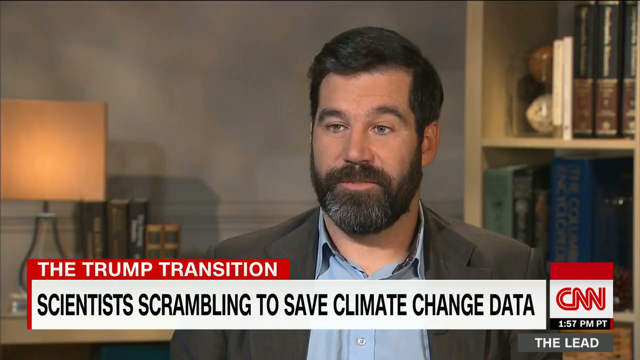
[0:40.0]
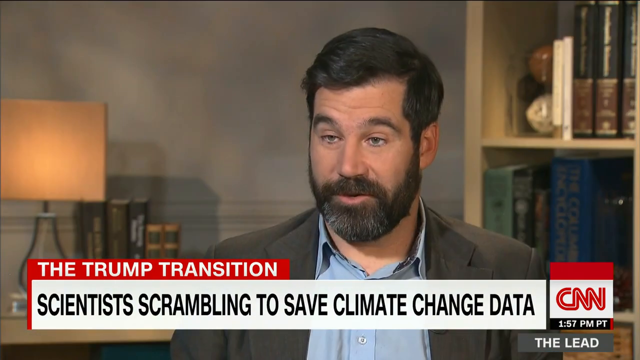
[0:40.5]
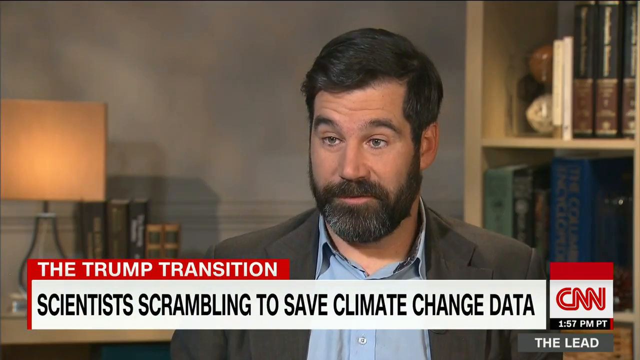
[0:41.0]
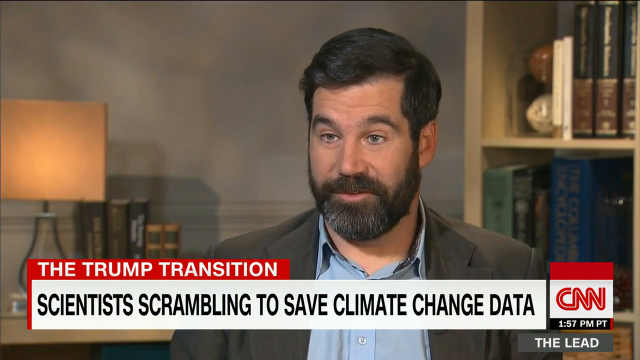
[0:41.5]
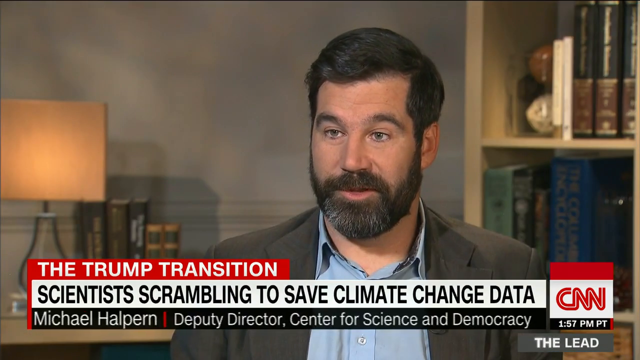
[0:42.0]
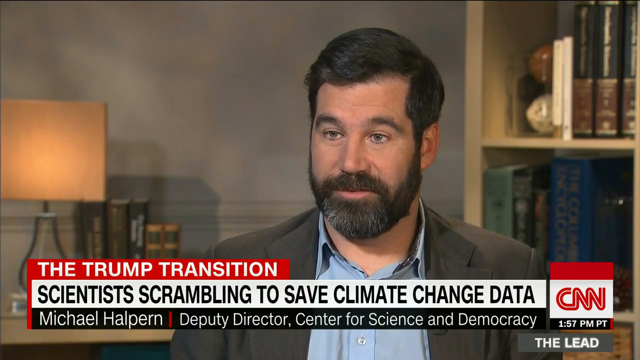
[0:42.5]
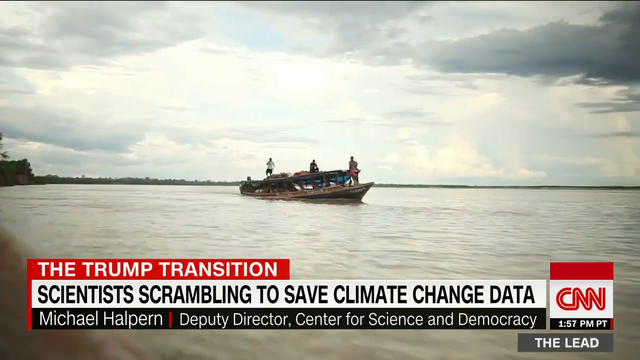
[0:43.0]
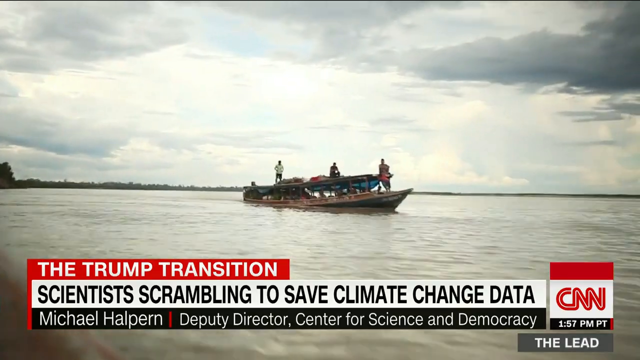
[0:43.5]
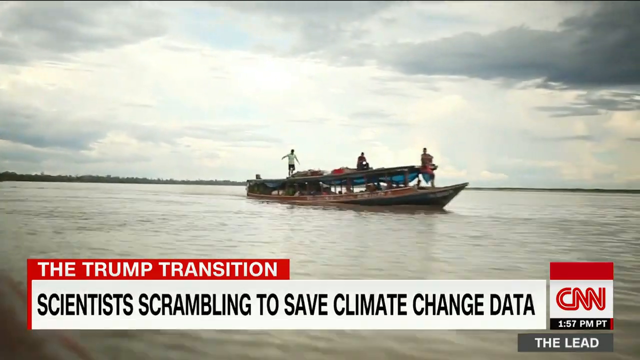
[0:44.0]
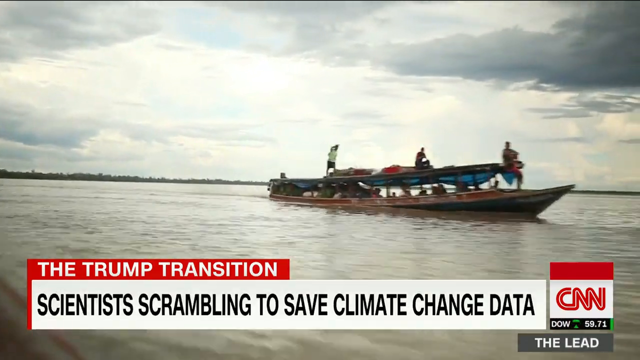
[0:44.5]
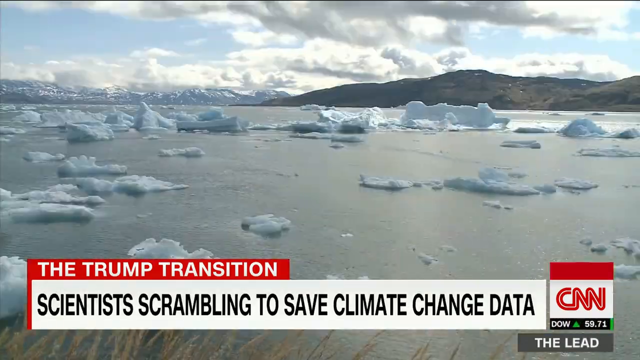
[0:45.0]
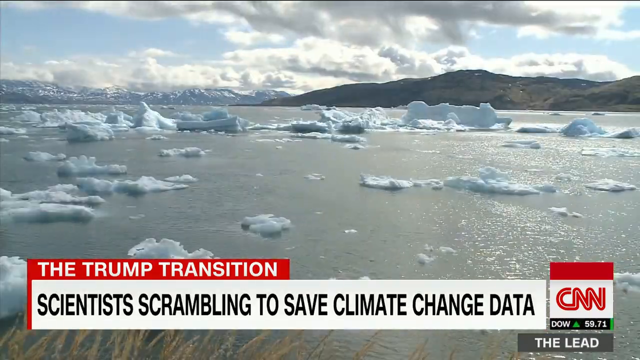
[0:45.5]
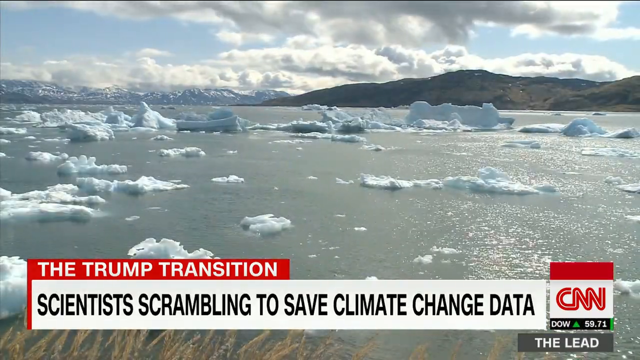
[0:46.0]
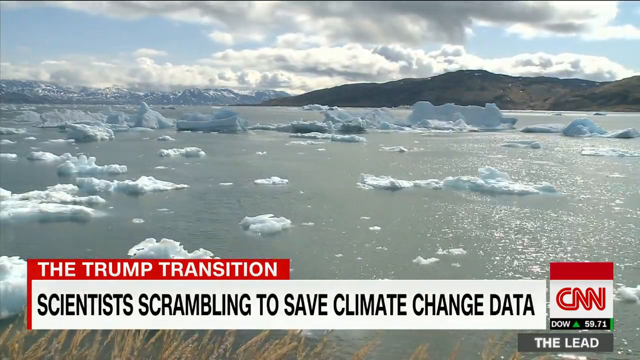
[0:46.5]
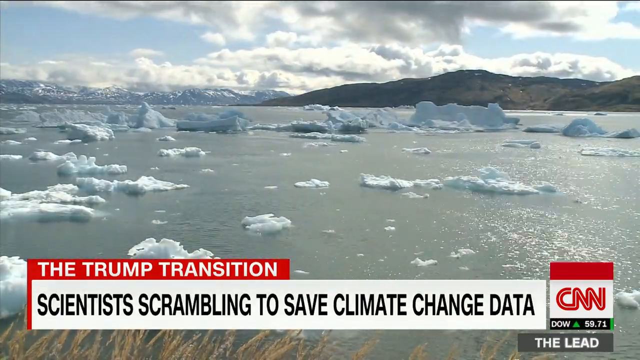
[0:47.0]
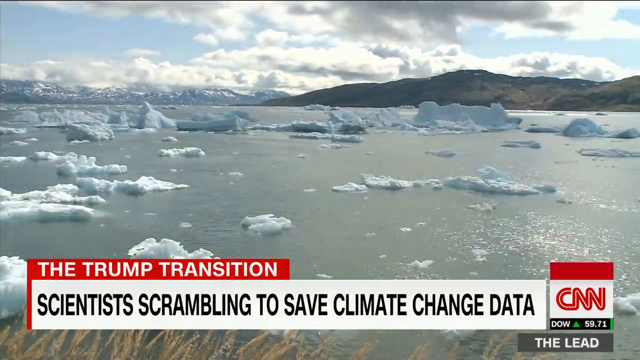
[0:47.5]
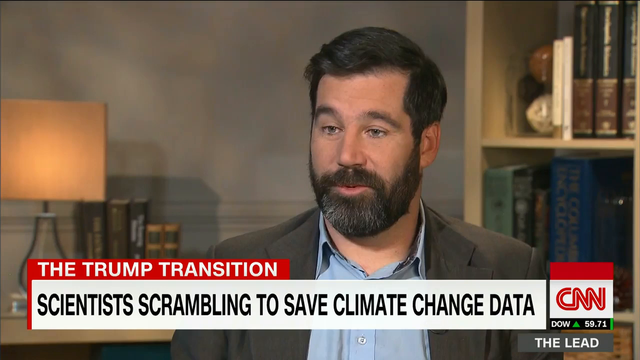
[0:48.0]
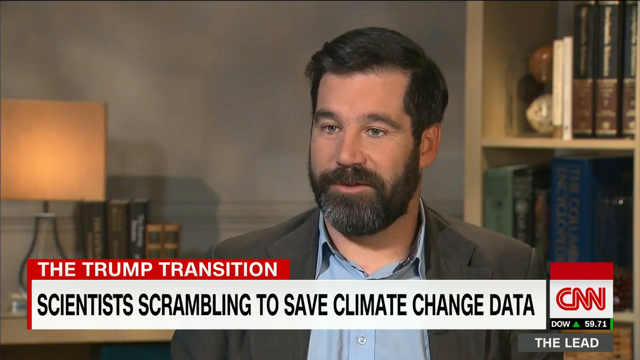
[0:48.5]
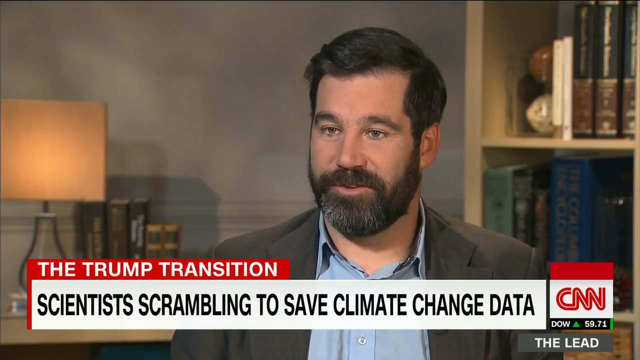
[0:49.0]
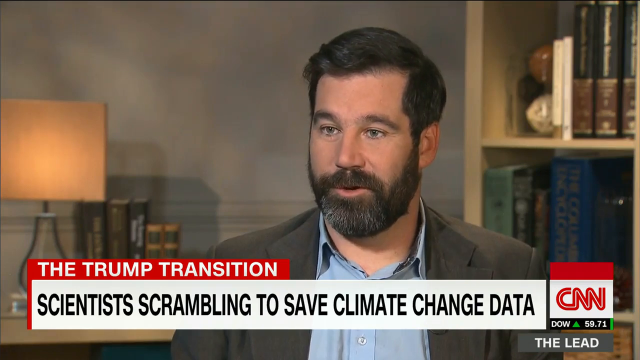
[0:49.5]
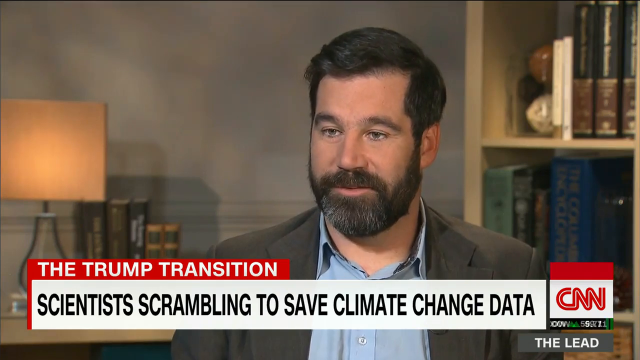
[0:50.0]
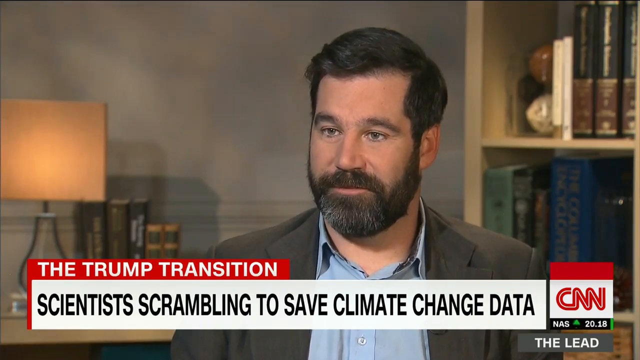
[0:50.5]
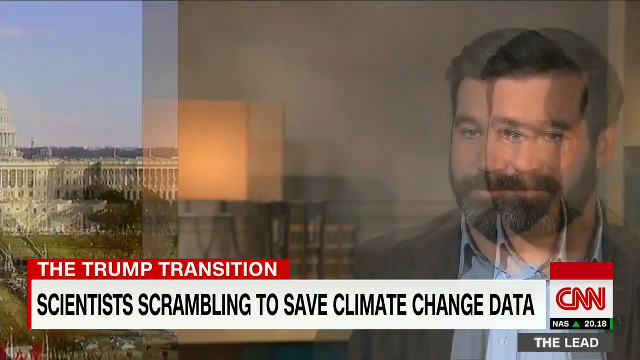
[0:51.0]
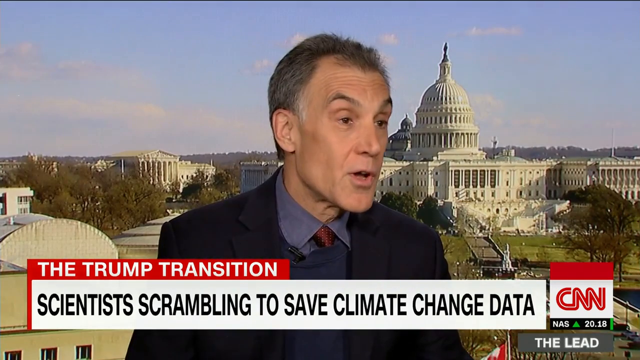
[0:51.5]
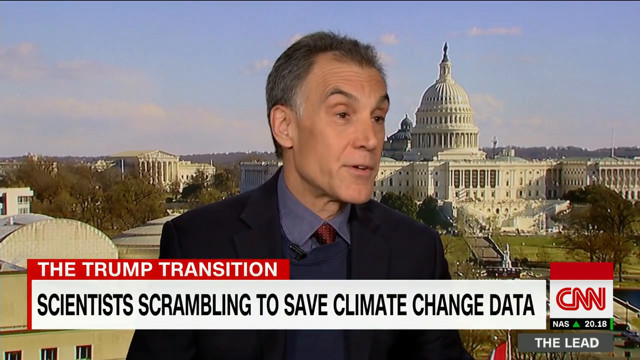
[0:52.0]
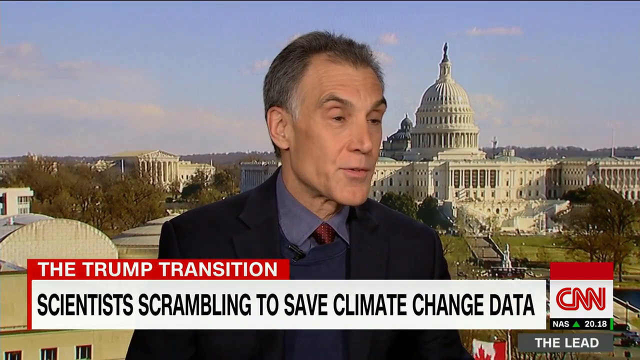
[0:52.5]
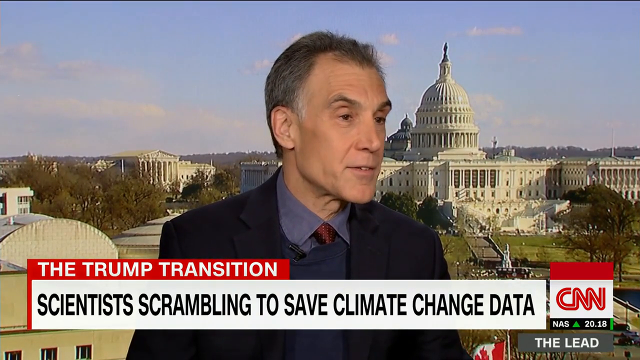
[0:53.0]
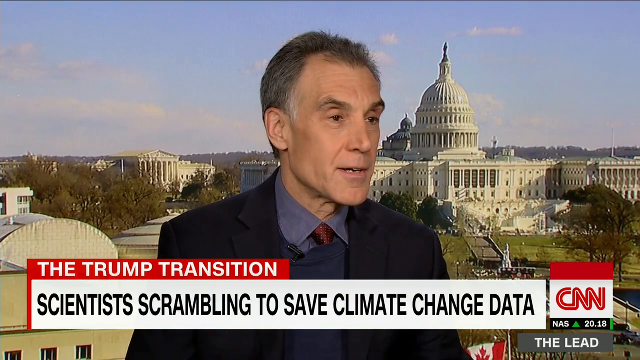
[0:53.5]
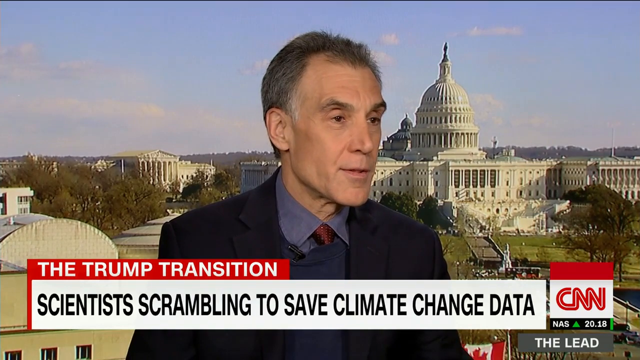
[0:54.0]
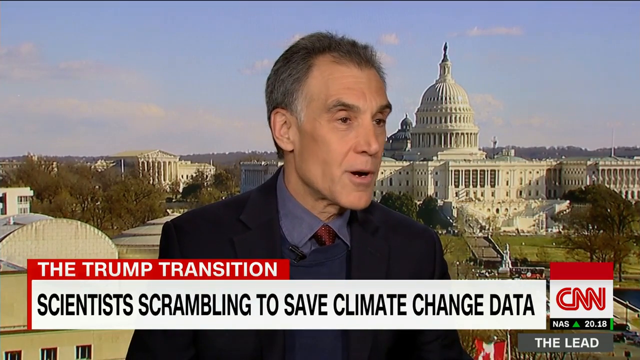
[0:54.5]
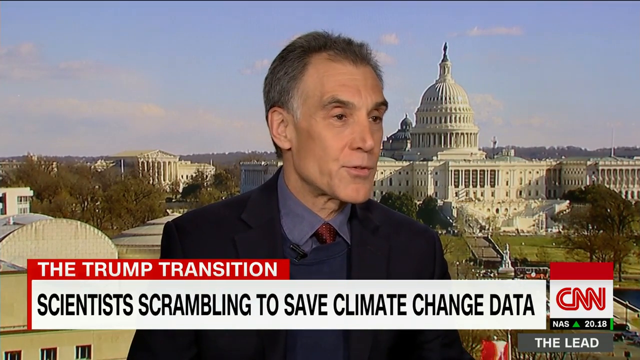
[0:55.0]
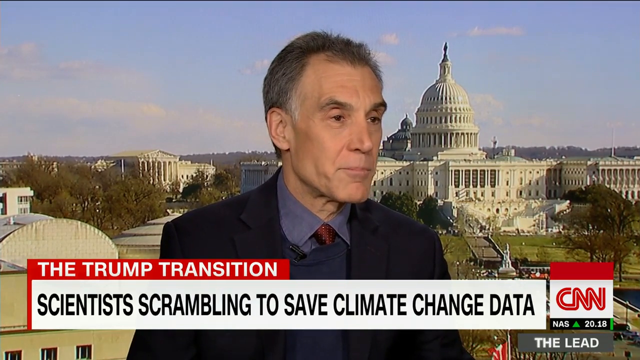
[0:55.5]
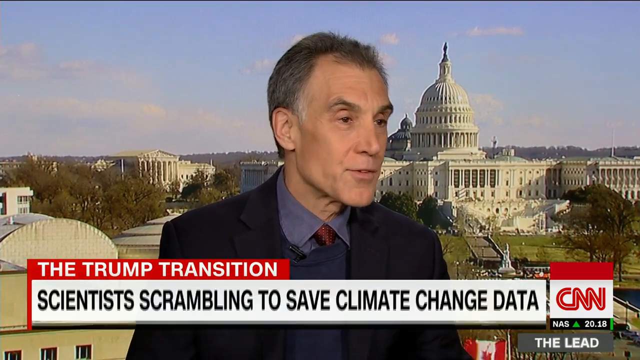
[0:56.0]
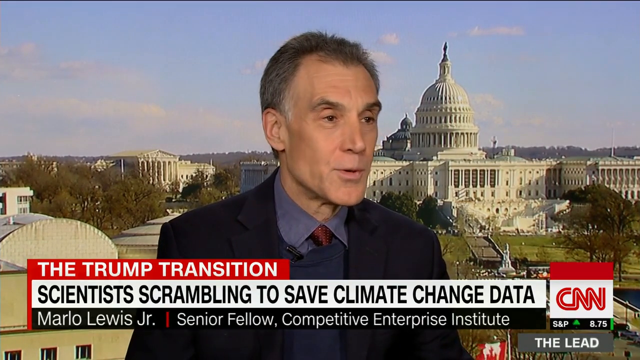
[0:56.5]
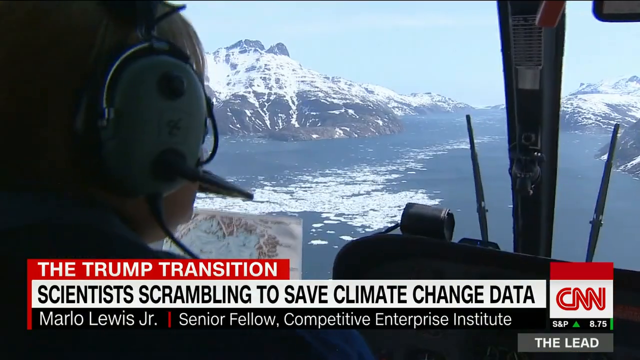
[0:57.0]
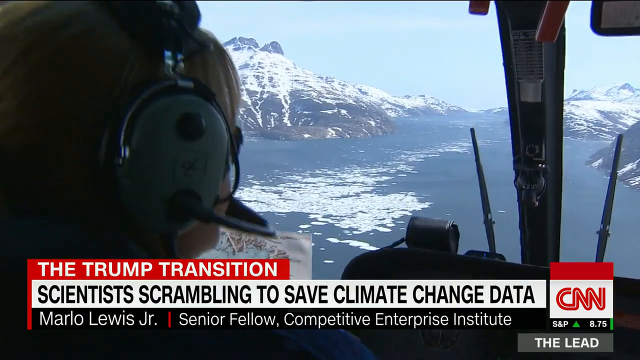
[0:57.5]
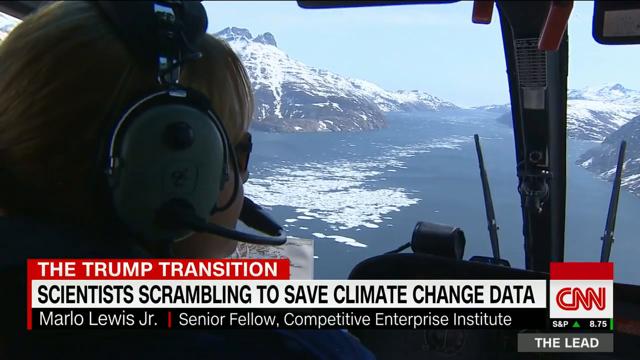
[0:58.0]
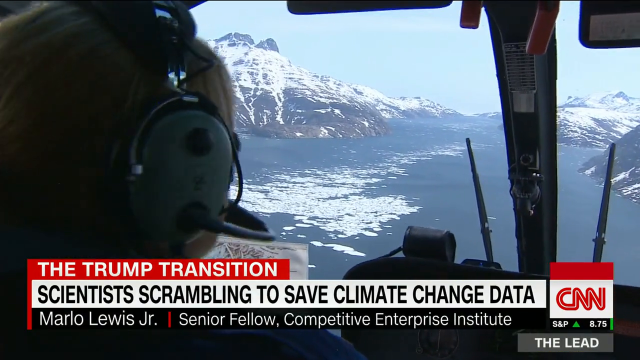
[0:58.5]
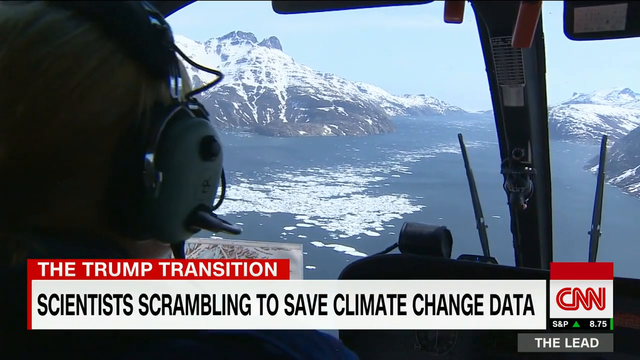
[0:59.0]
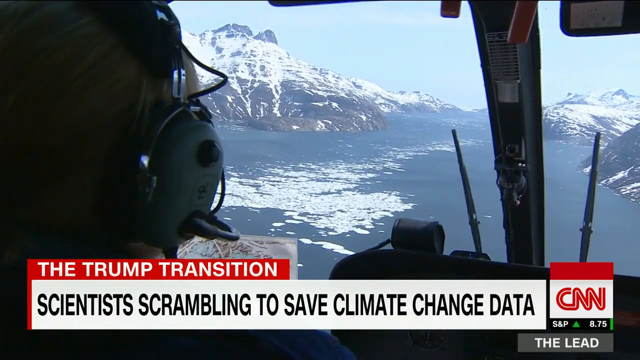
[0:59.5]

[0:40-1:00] A few people are on a boat, with several people standing outside the boat. As the camera zooms in, a title reads "Michael Halpern, Deputy Director, Center for Science and Democracy"; he looks like he might be talking. The camera zips by very fast, then cuts to what looks like an ocean on a sunny day, with some hillside in the background and little pieces of ice on the water. The screen changes to an interview with a middle-aged man with brown hair and a beard, a bookshelf and a lamp behind him, talking to the interviewer. It then cuts to another, somewhat older man with thinned-out hair, sitting down in a blue suit with an image of the White House in the background. His name shows up: "Marlo Lewis, Jr.", Senior Fellow for Competitive Enterprise Institute. The video then cuts to the interior of what looks like a helicopter, looking through the windshield at a snow mountain.